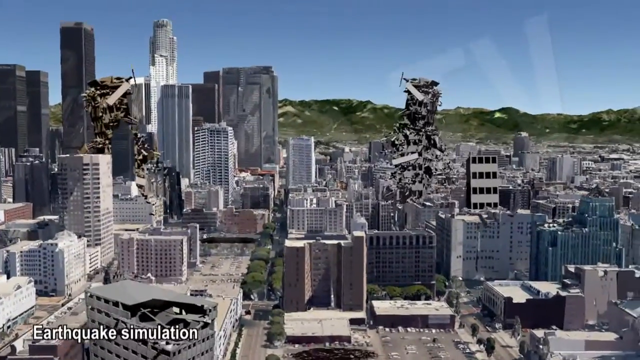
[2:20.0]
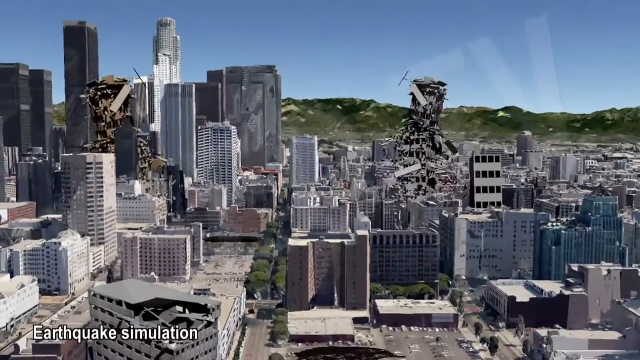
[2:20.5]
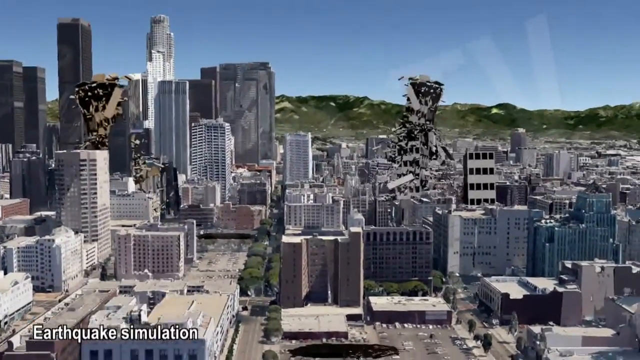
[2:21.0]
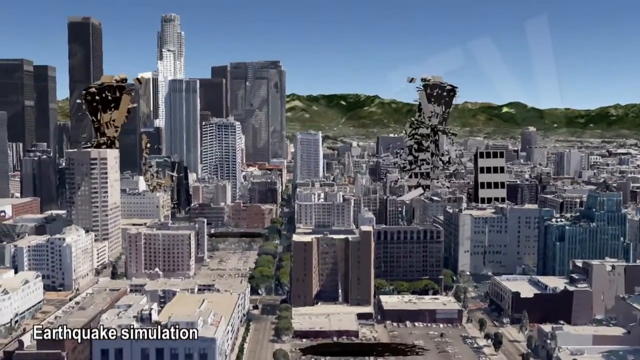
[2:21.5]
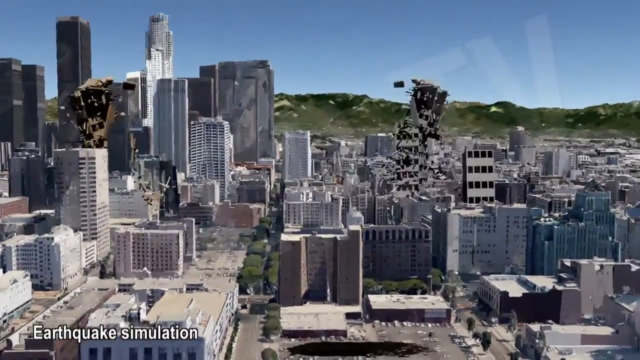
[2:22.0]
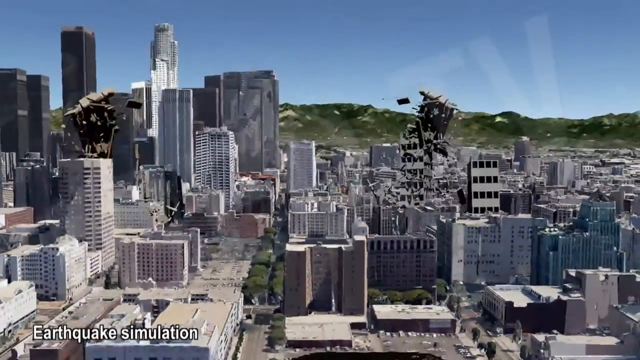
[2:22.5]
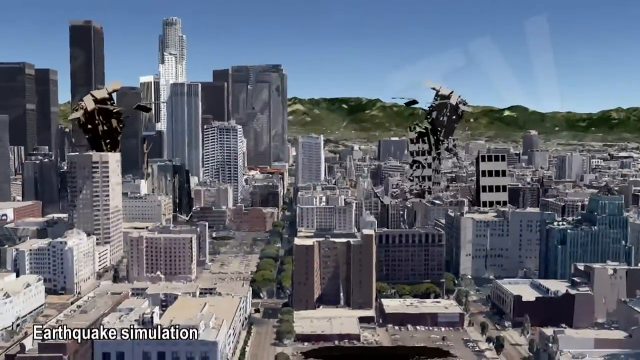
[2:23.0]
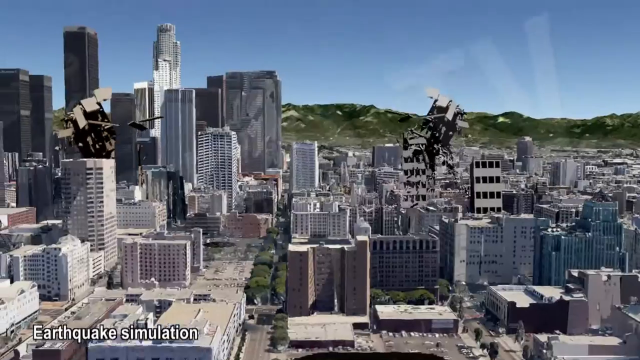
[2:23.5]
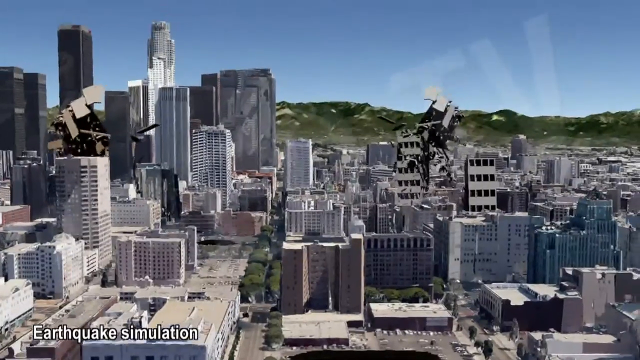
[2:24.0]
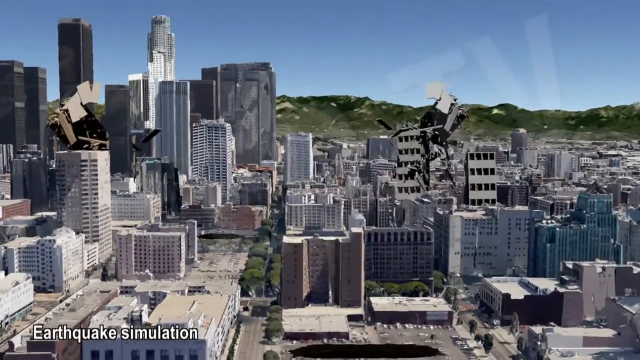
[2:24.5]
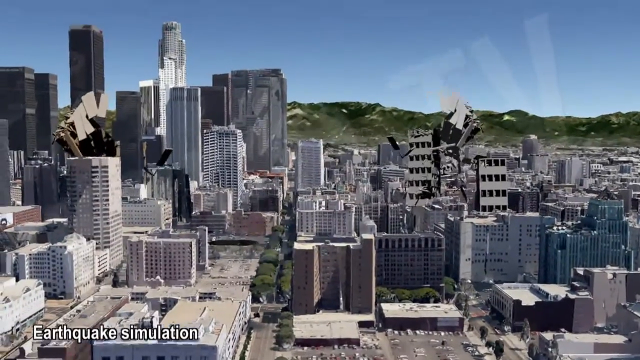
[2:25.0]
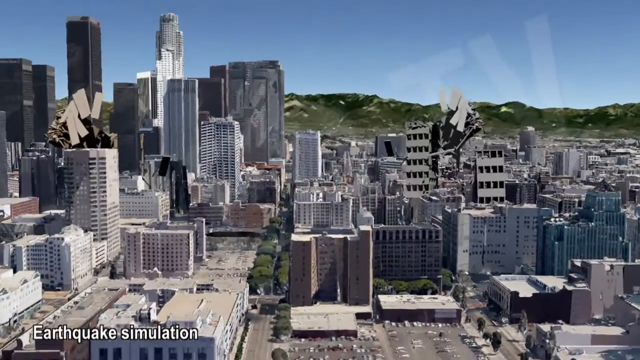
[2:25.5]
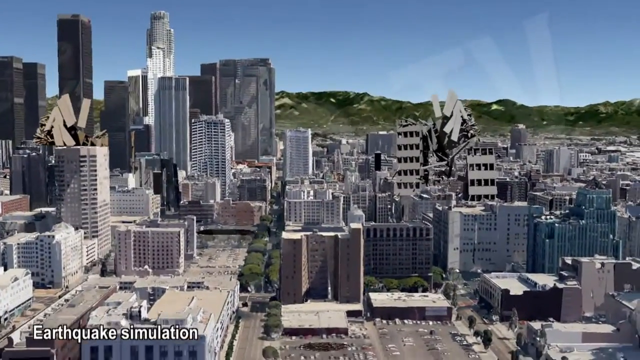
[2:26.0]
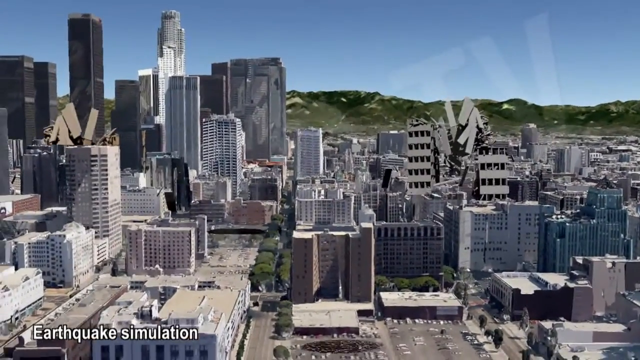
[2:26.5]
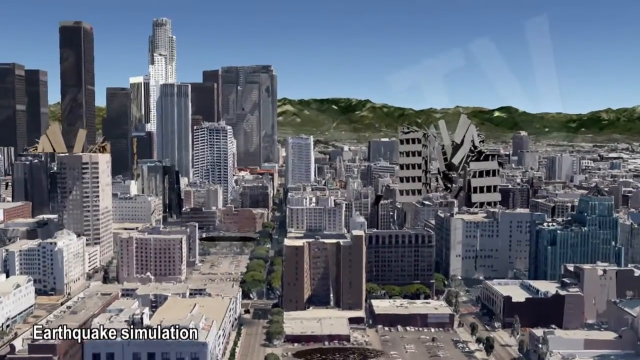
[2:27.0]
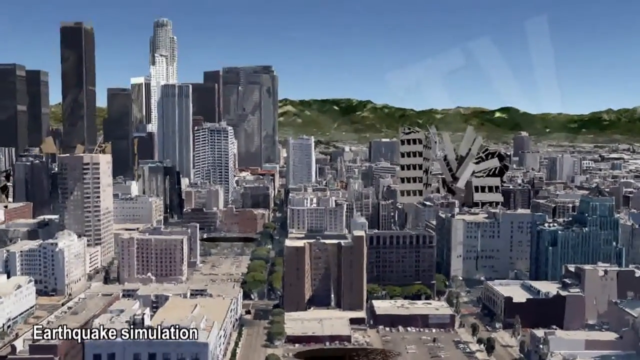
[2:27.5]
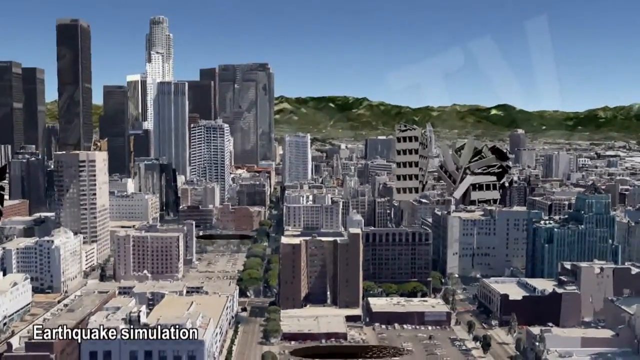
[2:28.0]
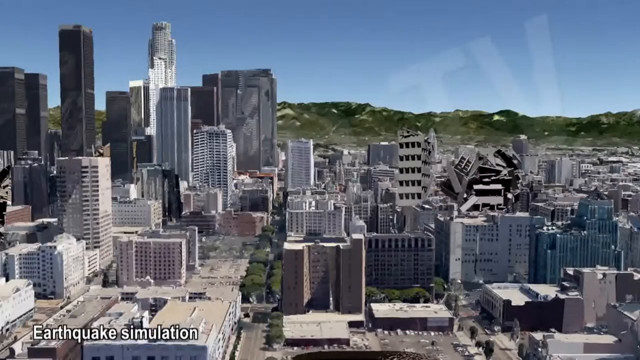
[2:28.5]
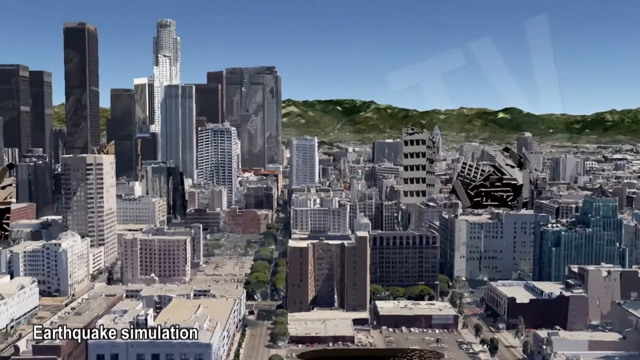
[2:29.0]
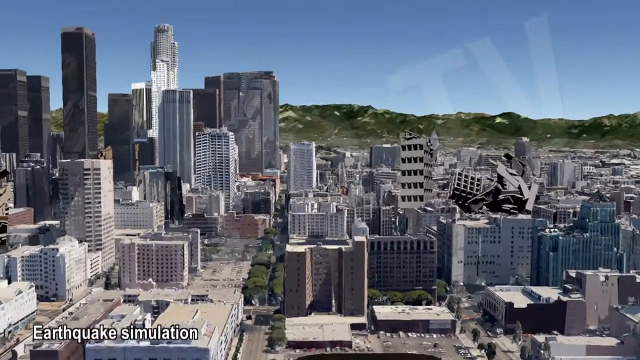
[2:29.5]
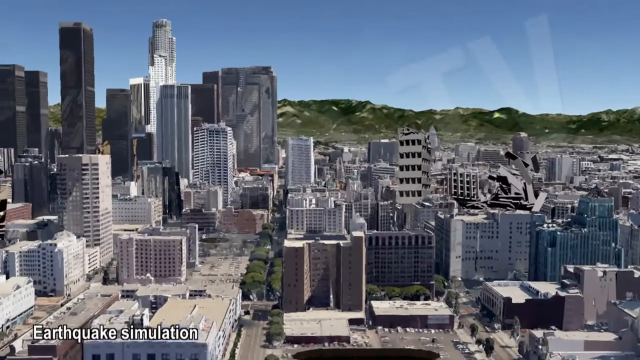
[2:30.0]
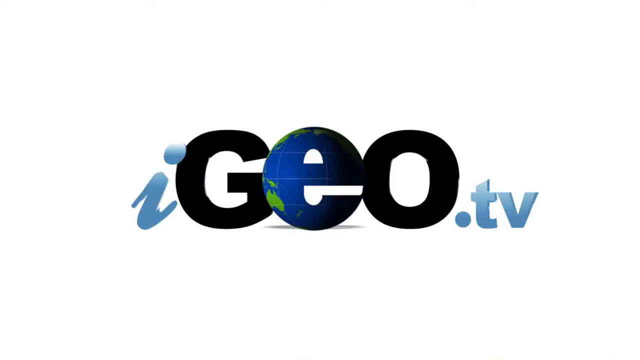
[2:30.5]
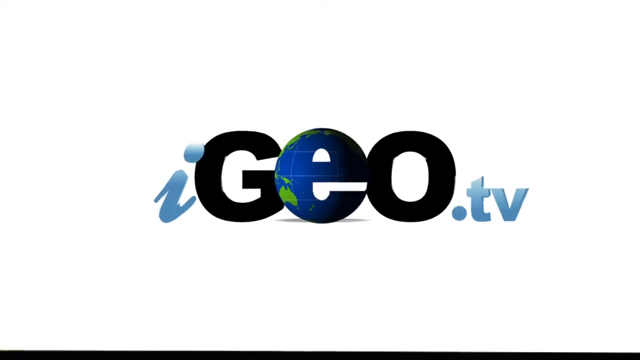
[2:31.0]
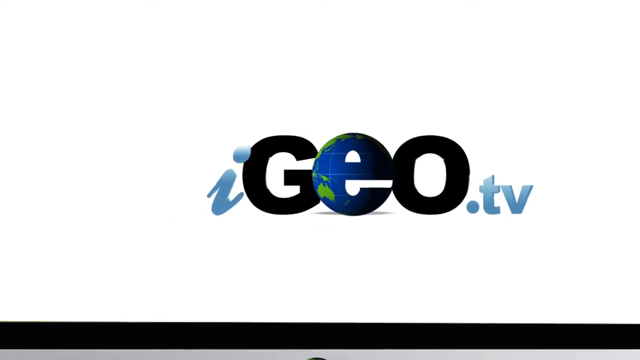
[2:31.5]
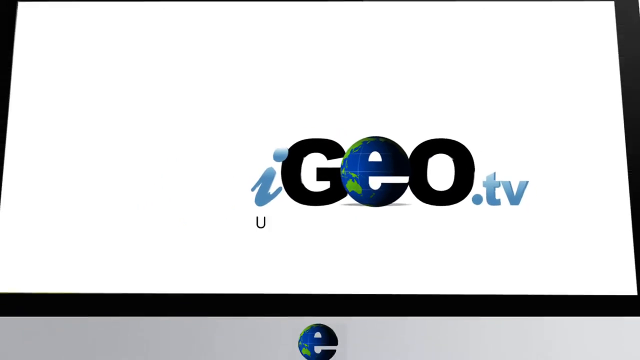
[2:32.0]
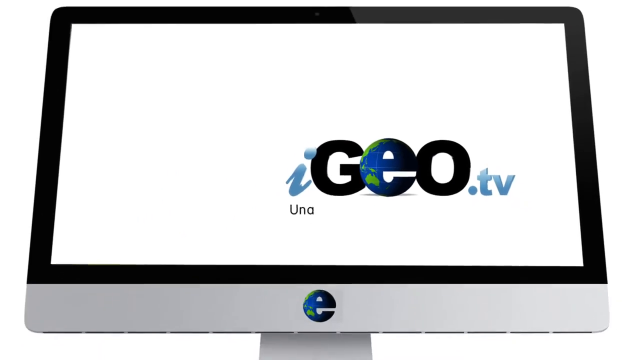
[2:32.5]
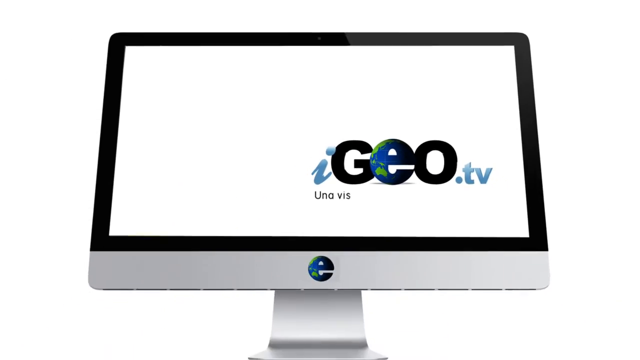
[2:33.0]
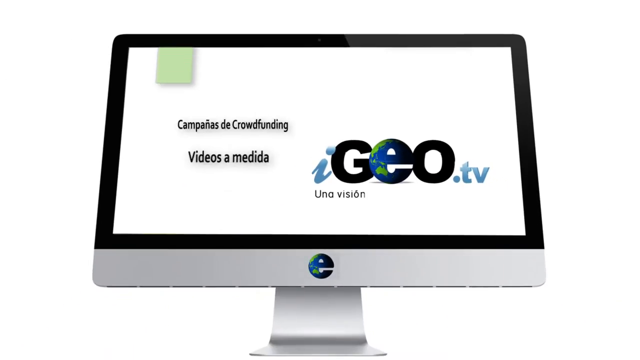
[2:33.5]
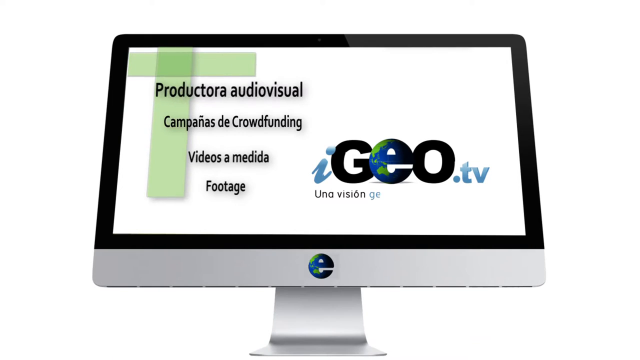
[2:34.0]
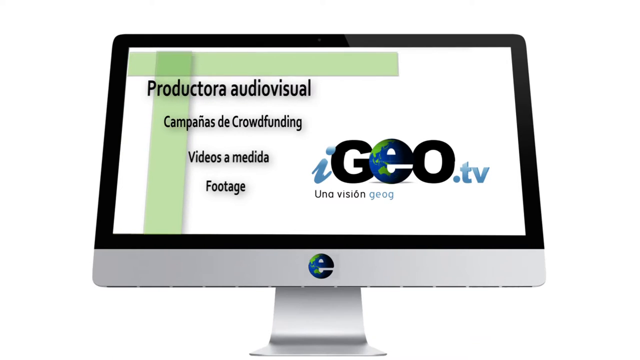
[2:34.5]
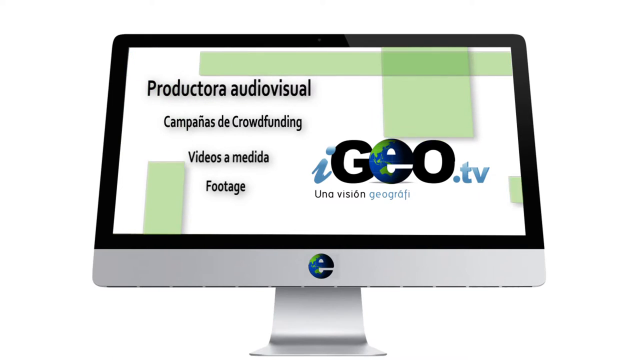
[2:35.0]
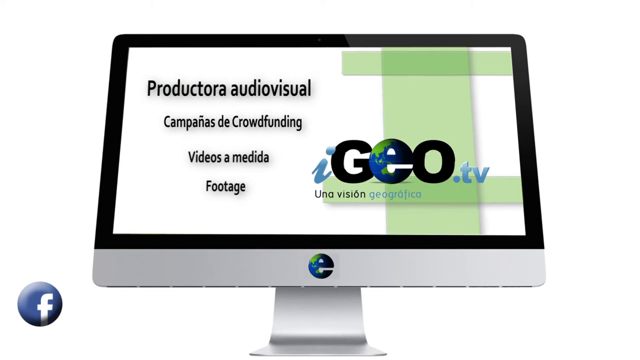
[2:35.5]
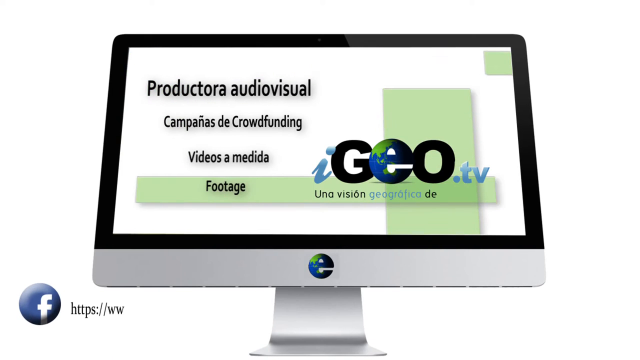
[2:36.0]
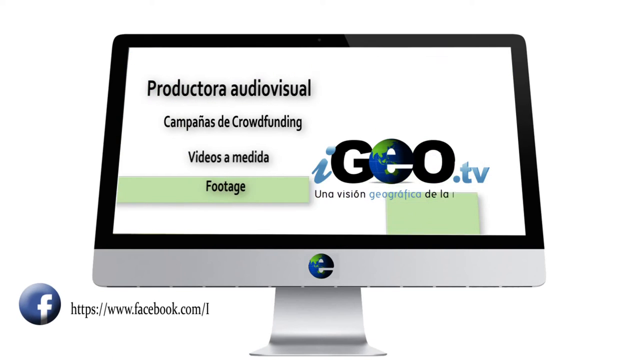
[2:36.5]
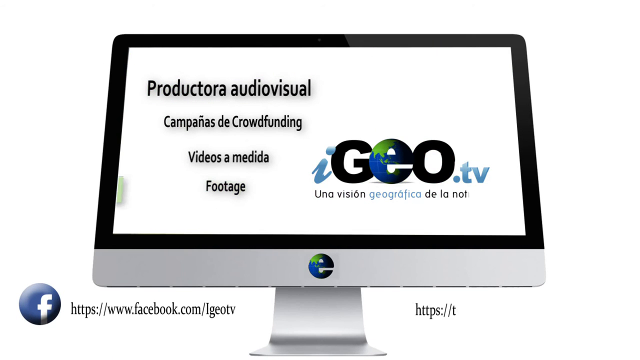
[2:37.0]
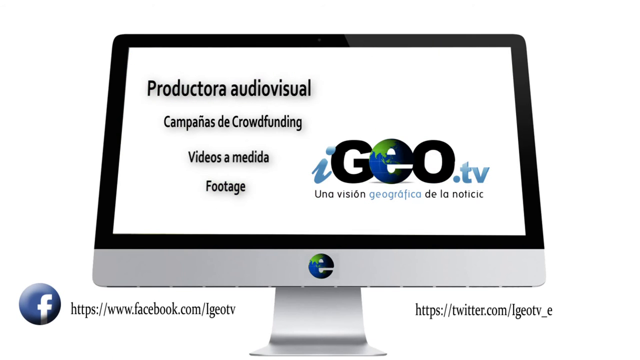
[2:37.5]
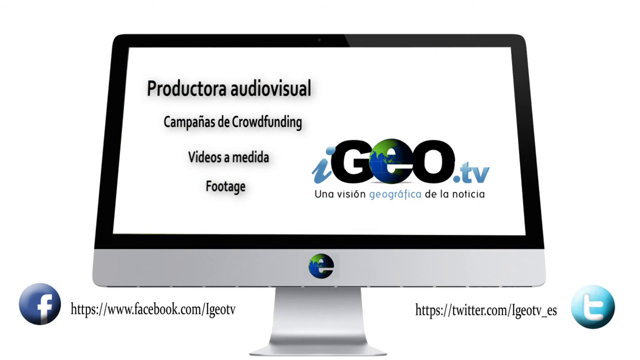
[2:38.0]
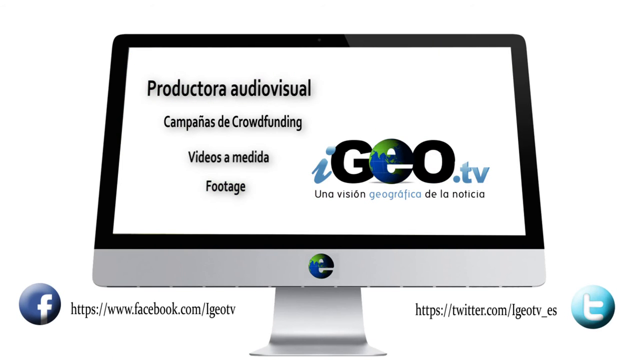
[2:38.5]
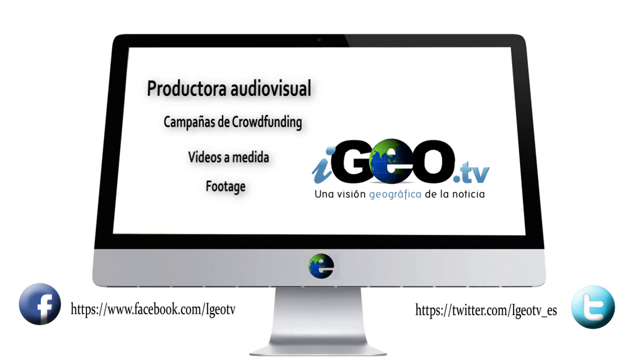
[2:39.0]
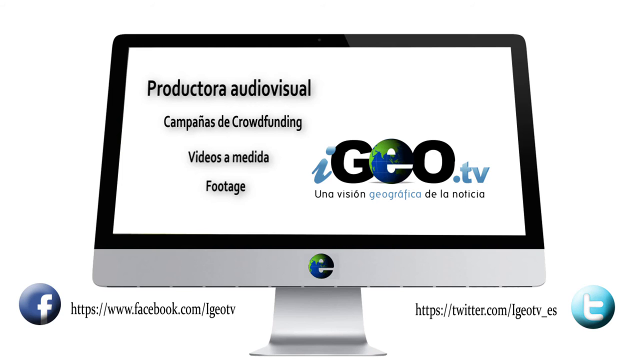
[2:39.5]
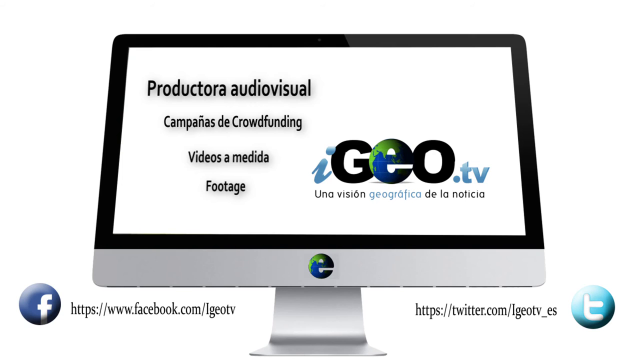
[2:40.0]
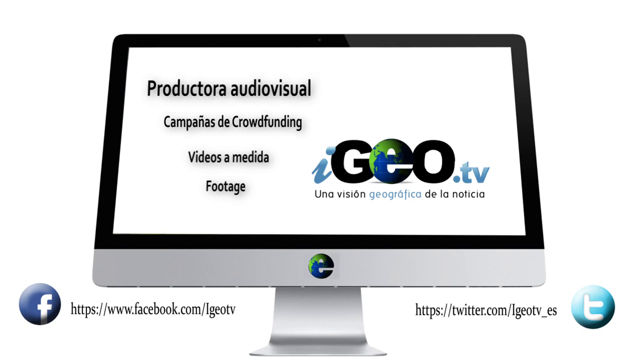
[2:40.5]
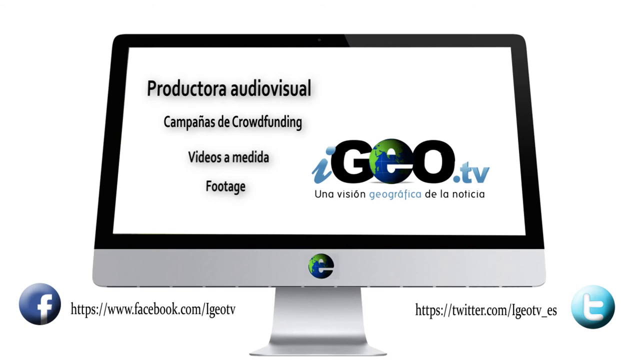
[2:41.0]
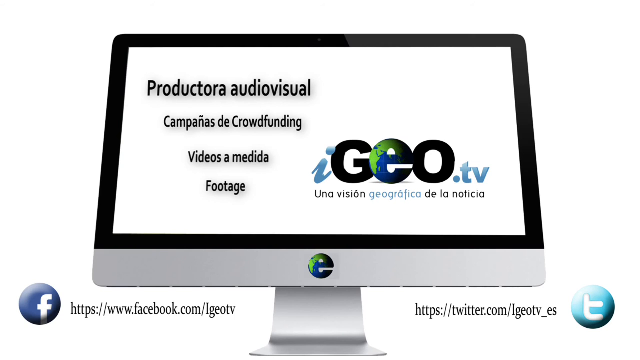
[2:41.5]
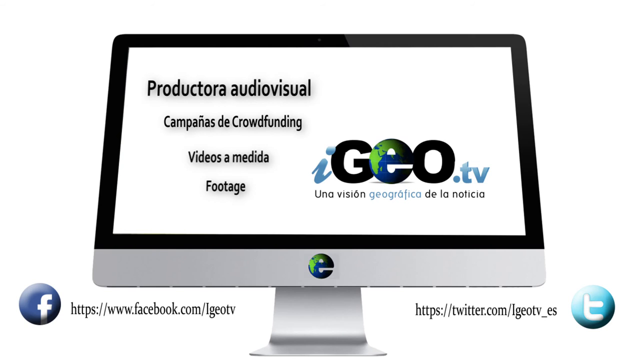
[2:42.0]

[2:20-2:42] A computer simulation shows San Francisco falling apart, with the skyscrapers falling down while the other buildings look fine. Text then reads "geo.tv" and "una vision", followed by "geo.tv, una vision, geografia, geografica de la noticia" and "productora audiovisual, compañías de crowdfunding, videos a medida, footage." It seems the video was posted on Facebook and Twitter.